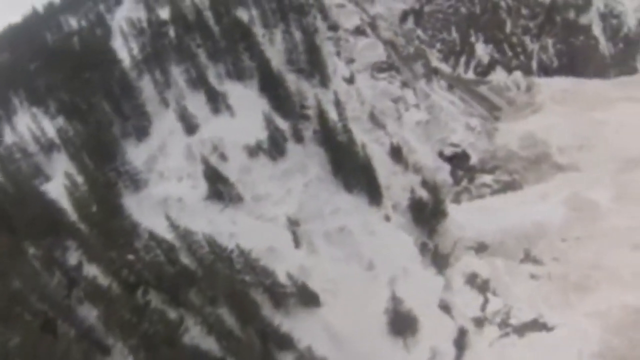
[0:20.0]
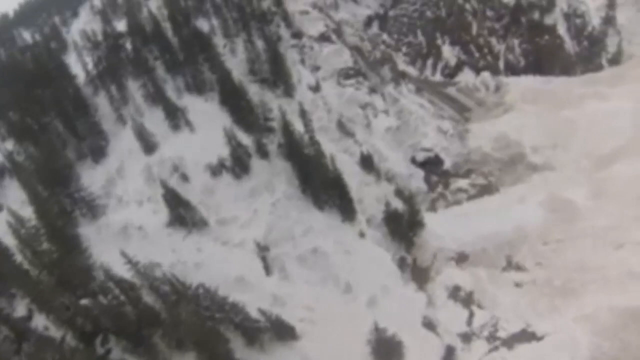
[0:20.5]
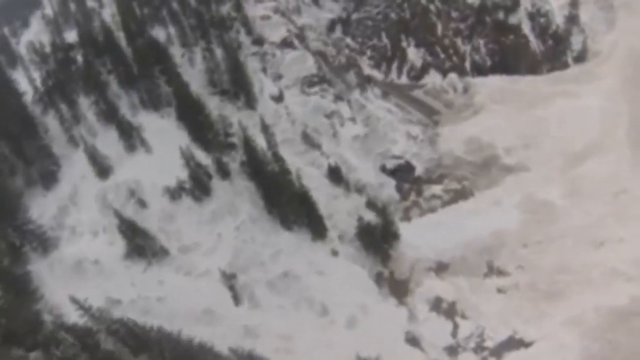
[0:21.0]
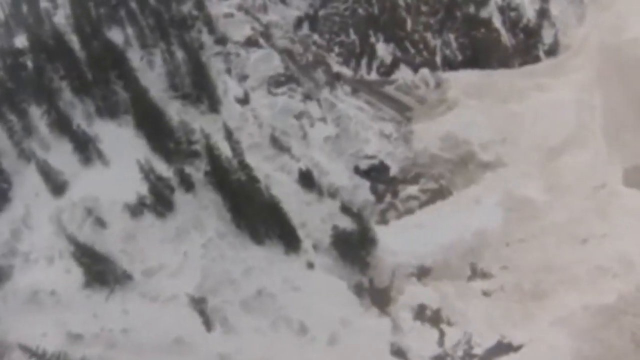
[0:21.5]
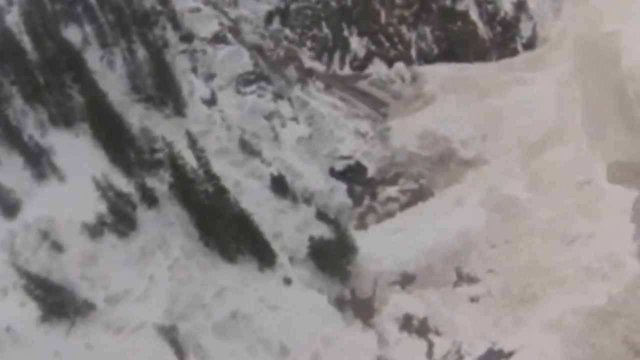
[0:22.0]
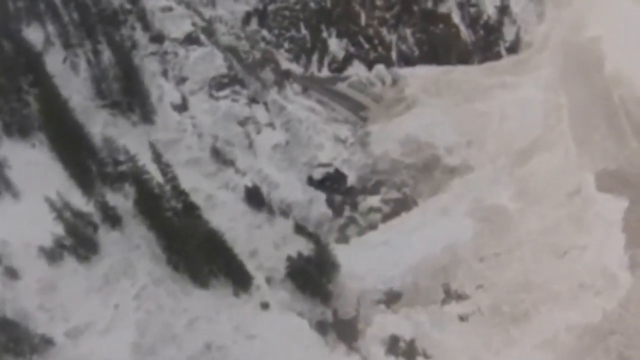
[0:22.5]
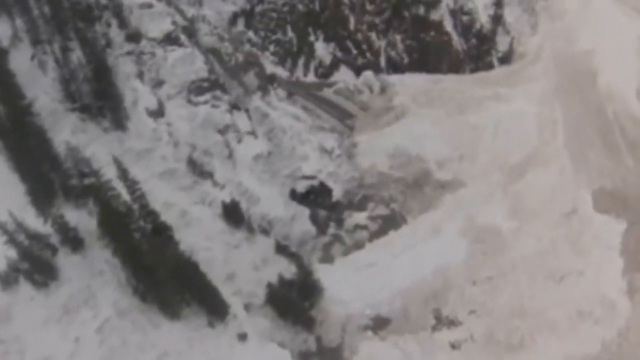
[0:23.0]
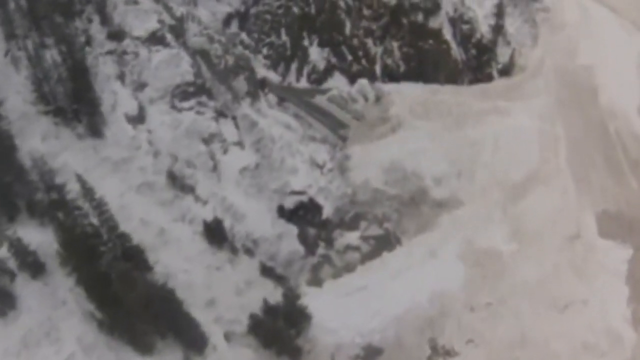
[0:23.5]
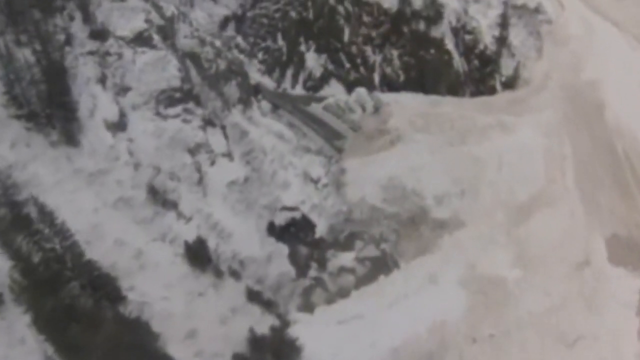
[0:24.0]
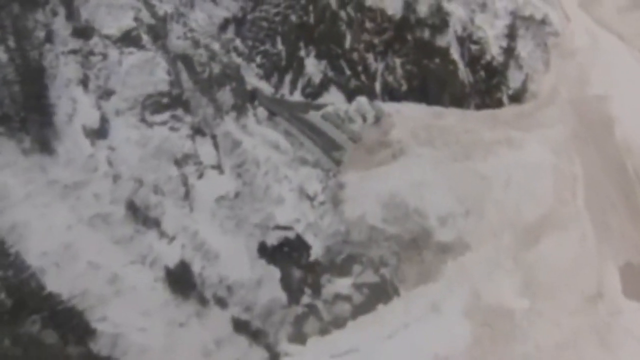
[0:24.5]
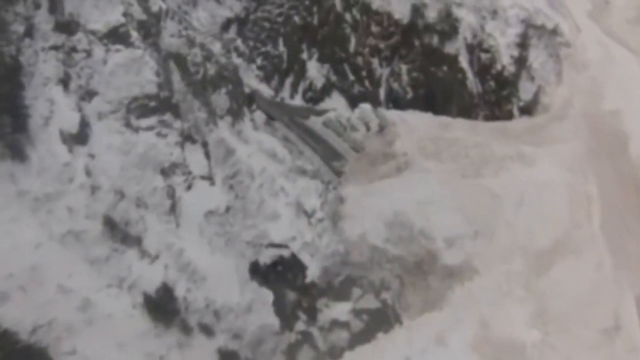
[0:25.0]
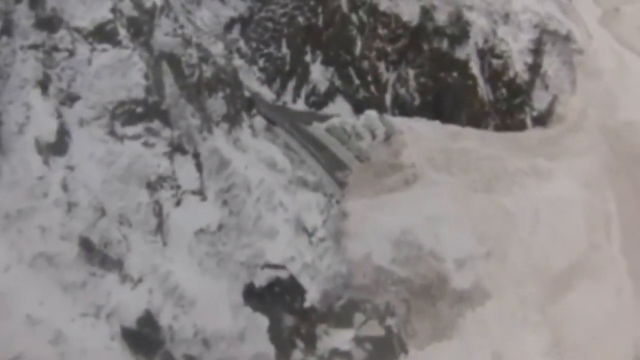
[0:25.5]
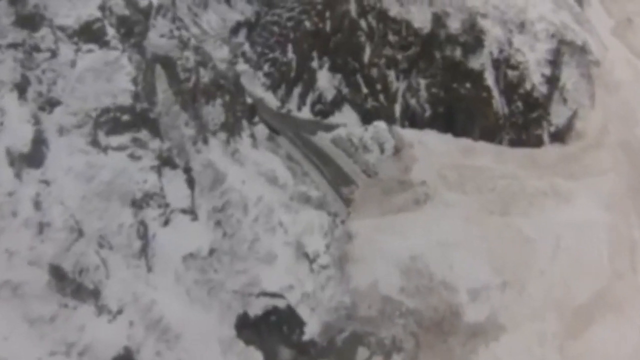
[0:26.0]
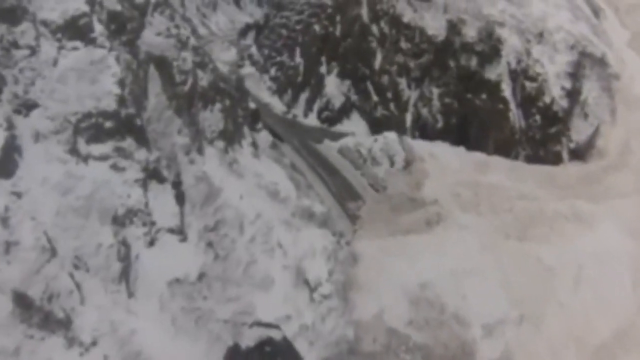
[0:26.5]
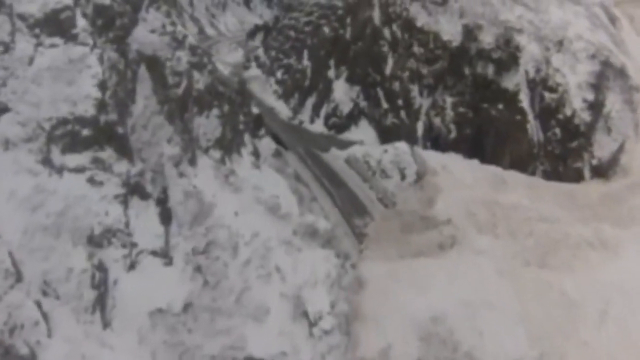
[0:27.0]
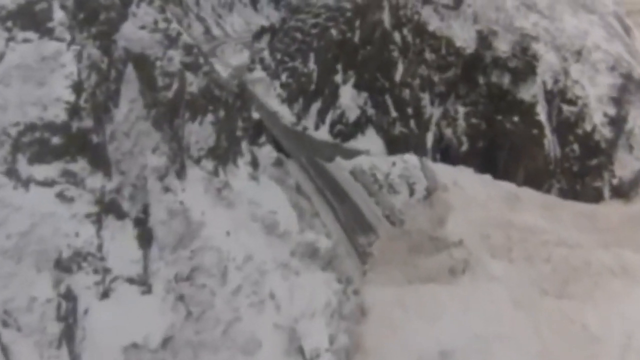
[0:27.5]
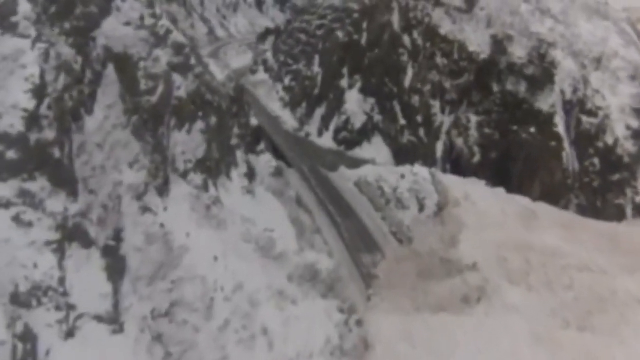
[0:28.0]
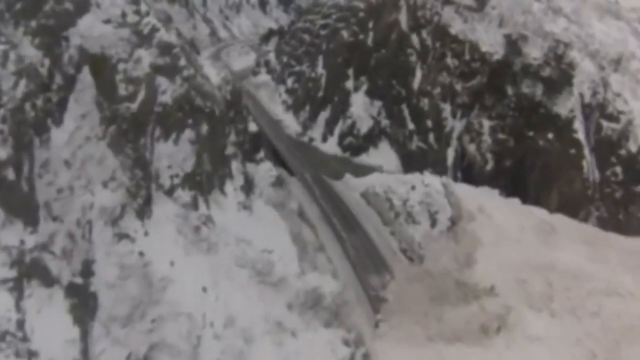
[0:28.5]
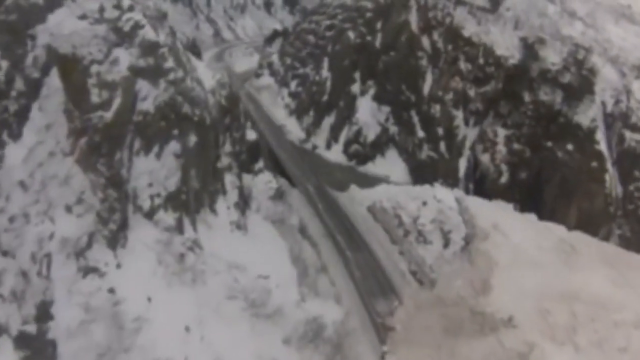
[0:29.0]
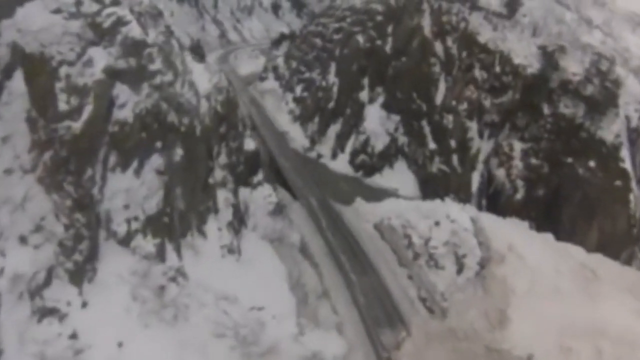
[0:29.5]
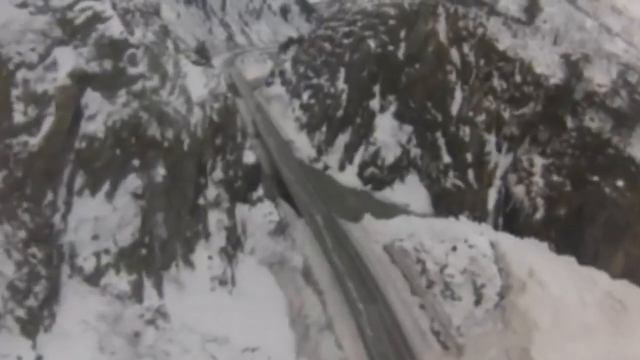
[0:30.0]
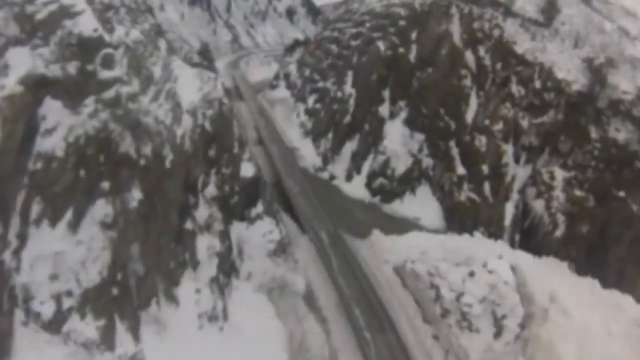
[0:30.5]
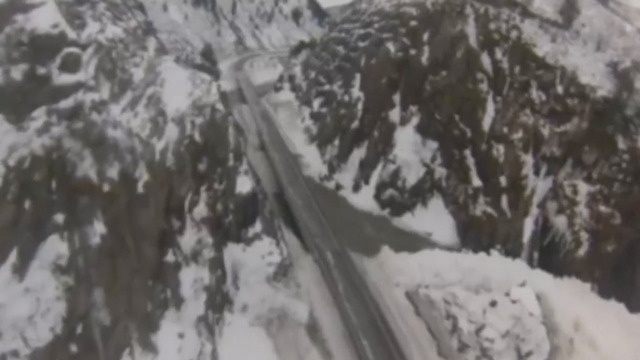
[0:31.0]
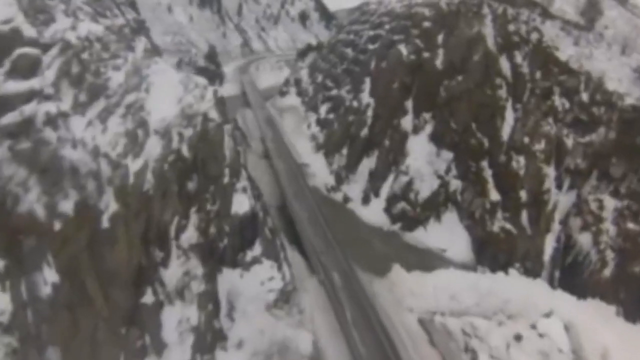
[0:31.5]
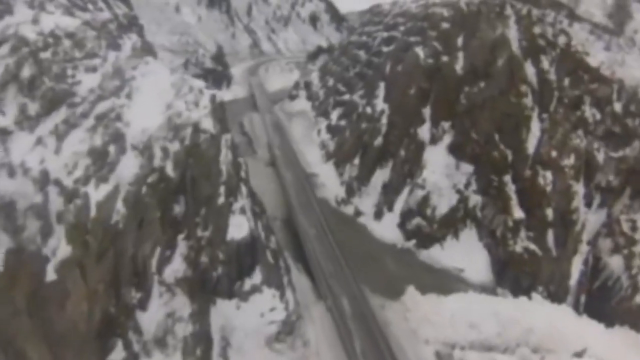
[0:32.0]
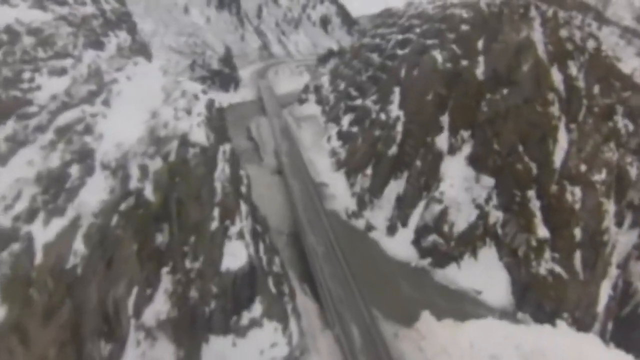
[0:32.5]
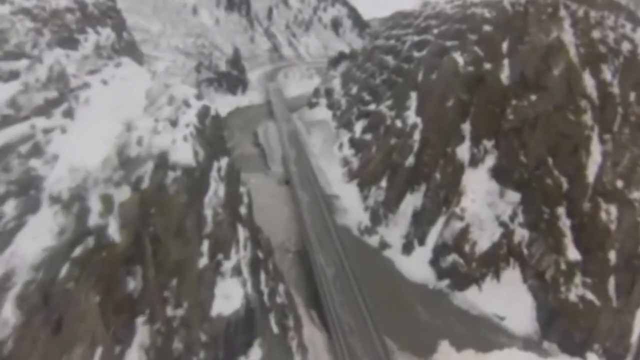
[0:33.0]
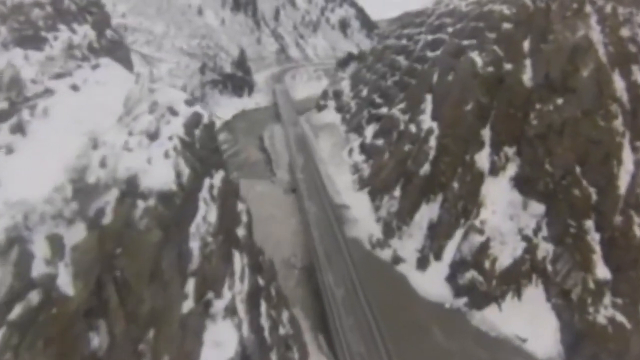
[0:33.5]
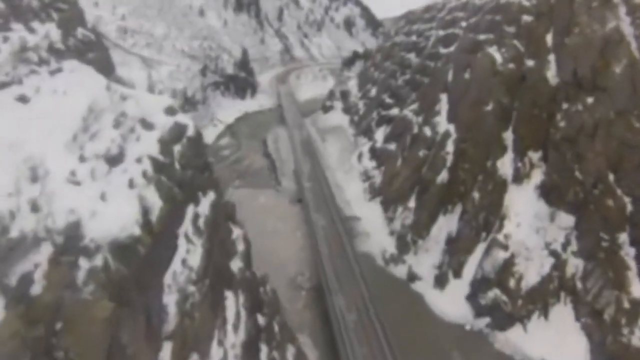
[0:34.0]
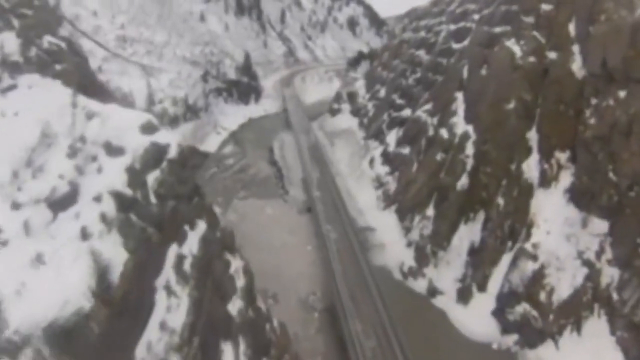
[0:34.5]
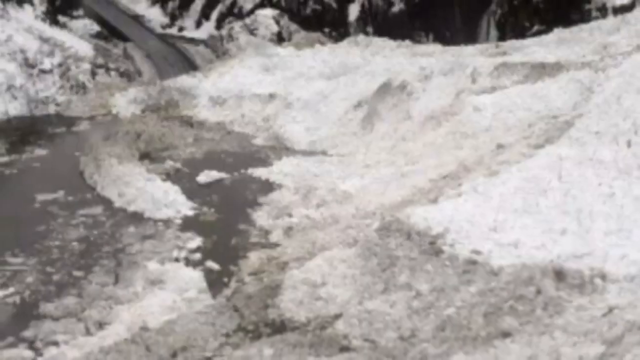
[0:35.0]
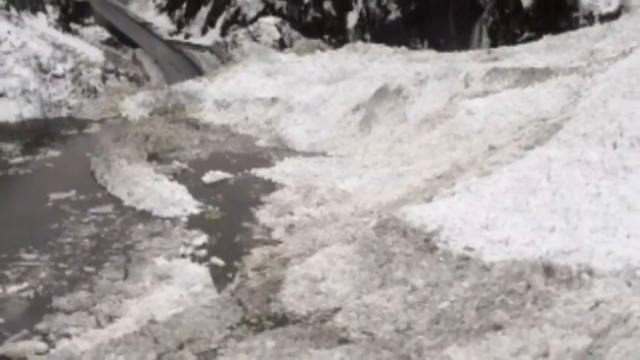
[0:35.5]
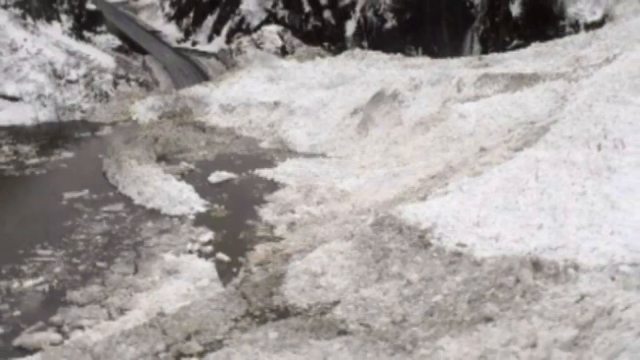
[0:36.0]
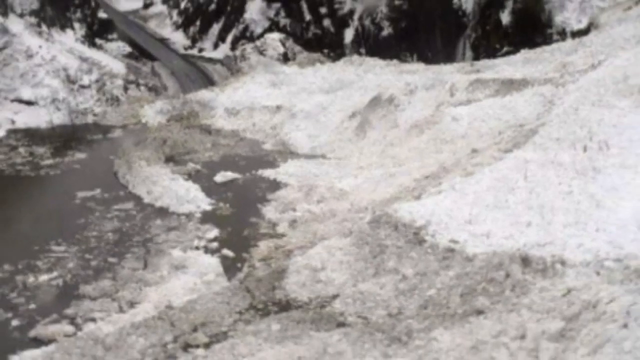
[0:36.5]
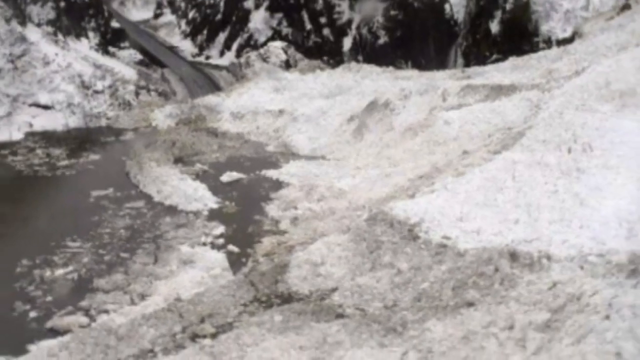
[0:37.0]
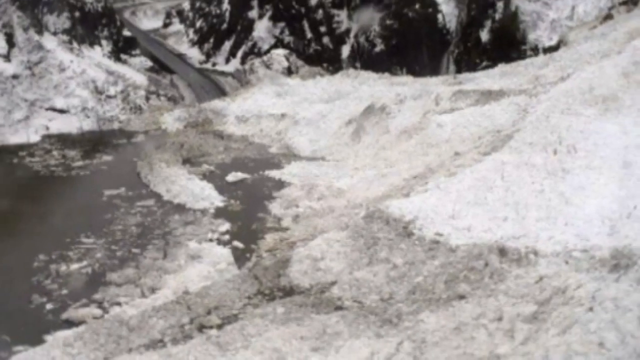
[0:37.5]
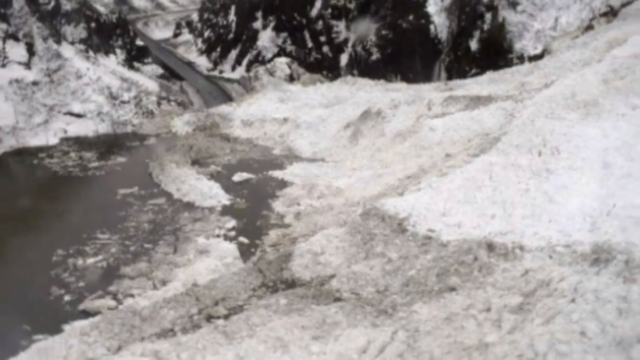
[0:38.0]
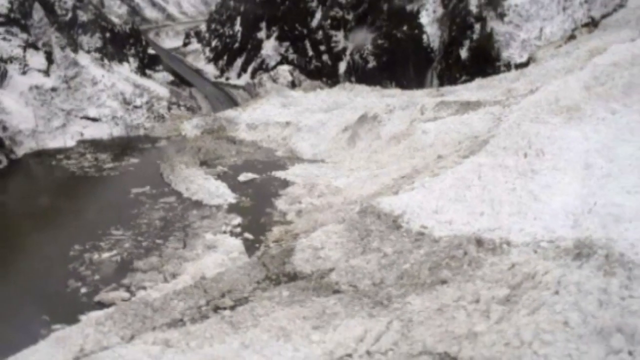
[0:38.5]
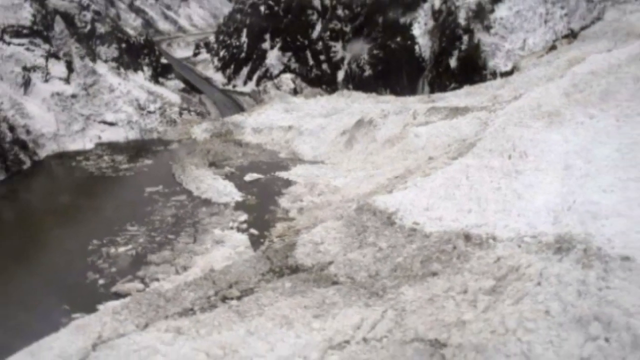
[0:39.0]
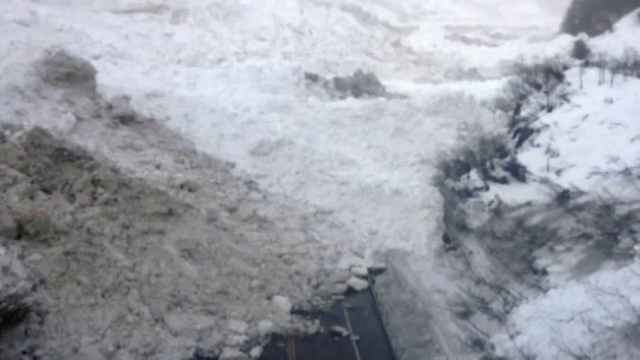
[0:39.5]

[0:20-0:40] The blurry-looking camera moves to a lower portion covered with a lot of snow, where a long piece of wood lies across the path. It shows some trees covered with snow, then goes down to a portion that looks even more covered with snow, and slowly traces down from that circular place to a portion of the ground that looks level and is filled with snow. The snow is mostly bright white. Some trees are completely covered with snow while others are less covered, and the tall mountains are also covered with lots of snow. The camera descends from a higher level to a lower one to show the level ground. The scene is not brightly colored; it looks dark in some areas and bright in others.